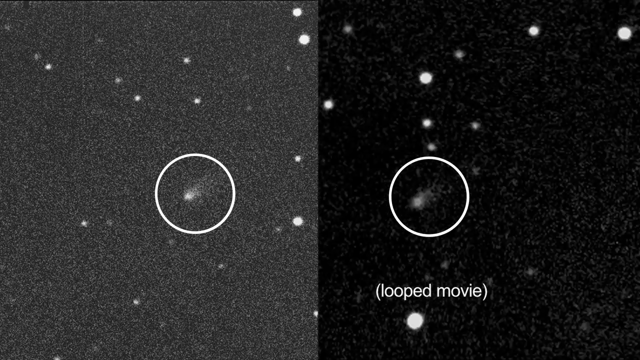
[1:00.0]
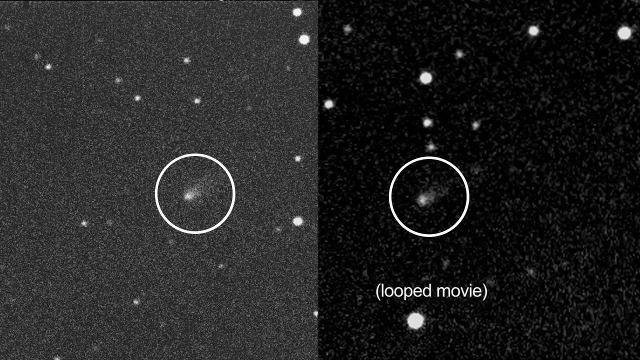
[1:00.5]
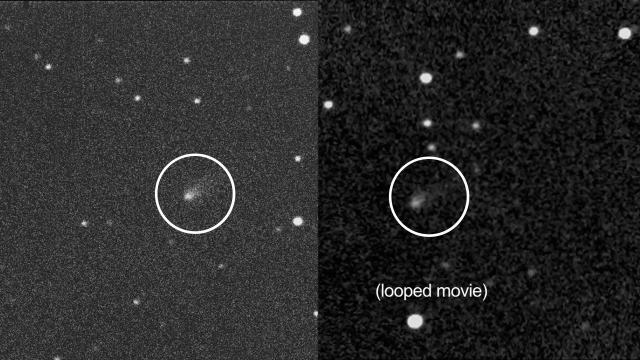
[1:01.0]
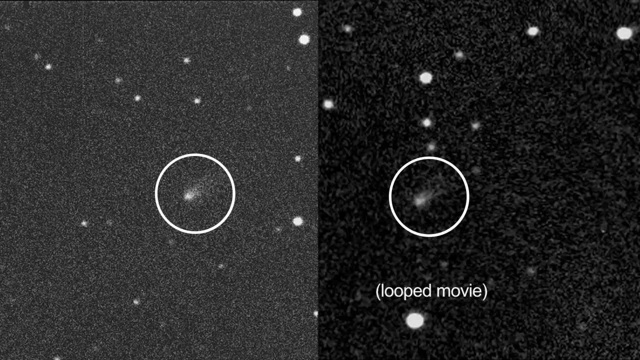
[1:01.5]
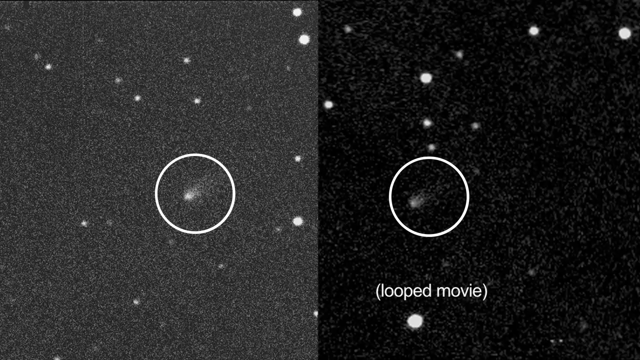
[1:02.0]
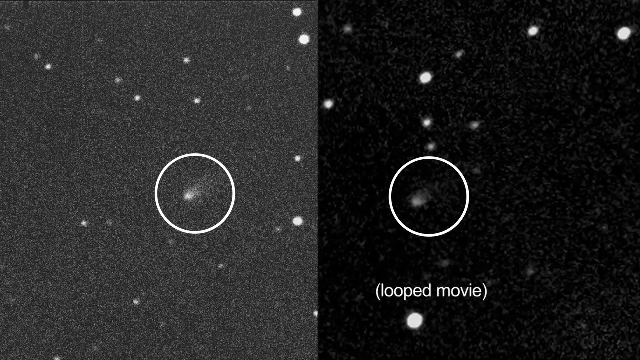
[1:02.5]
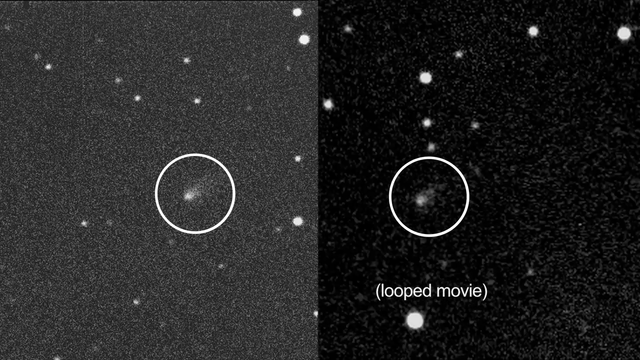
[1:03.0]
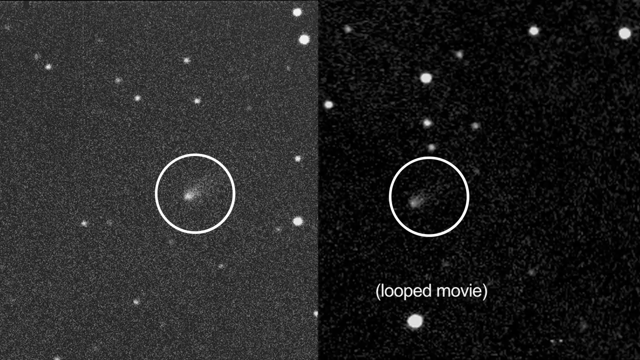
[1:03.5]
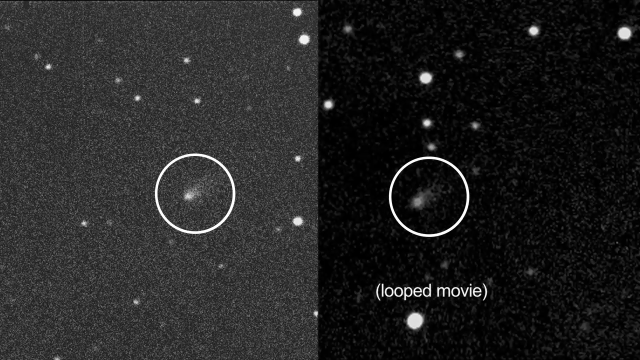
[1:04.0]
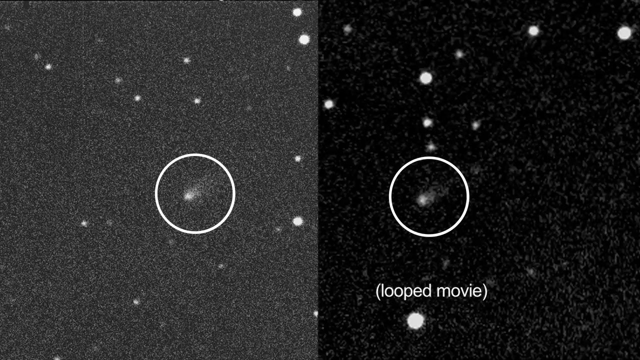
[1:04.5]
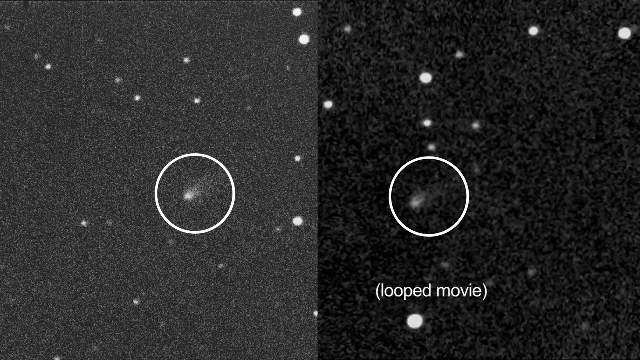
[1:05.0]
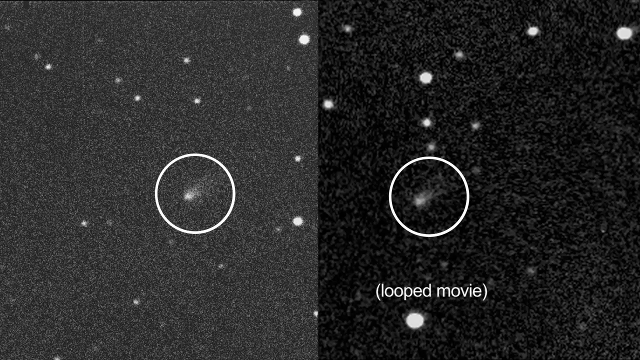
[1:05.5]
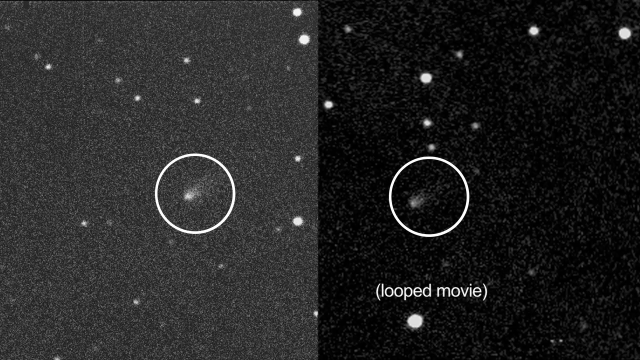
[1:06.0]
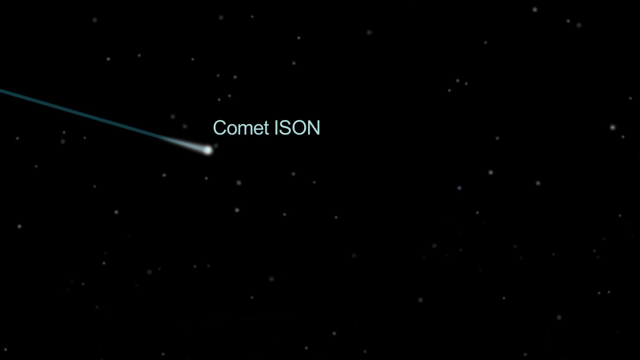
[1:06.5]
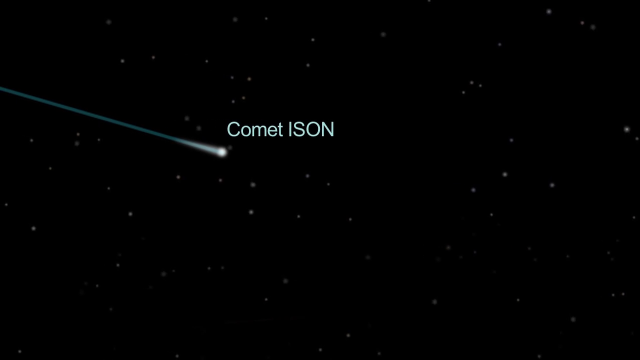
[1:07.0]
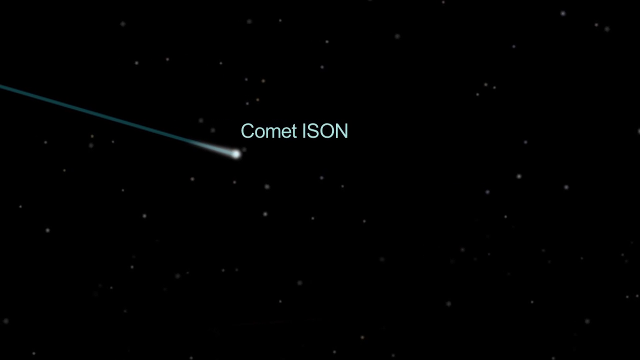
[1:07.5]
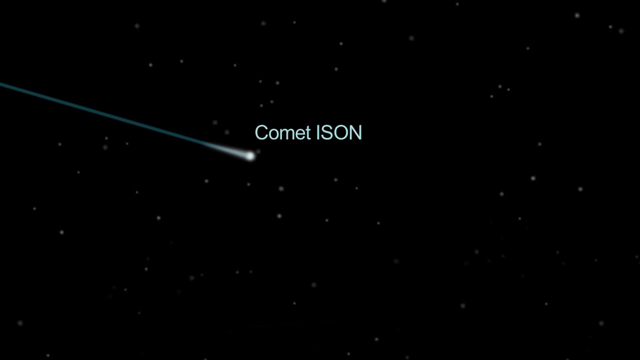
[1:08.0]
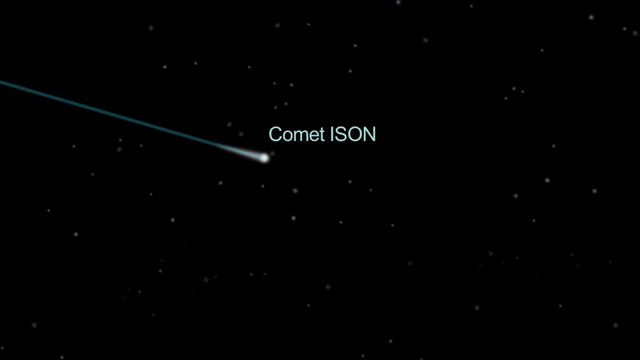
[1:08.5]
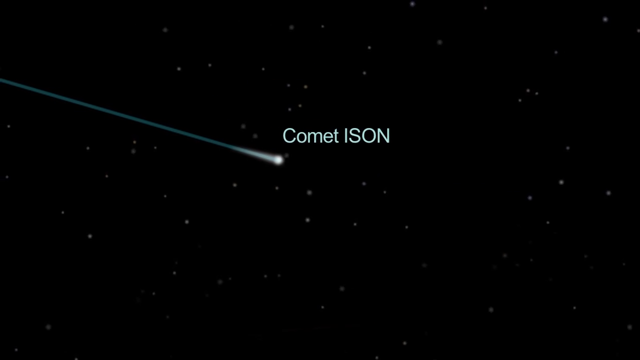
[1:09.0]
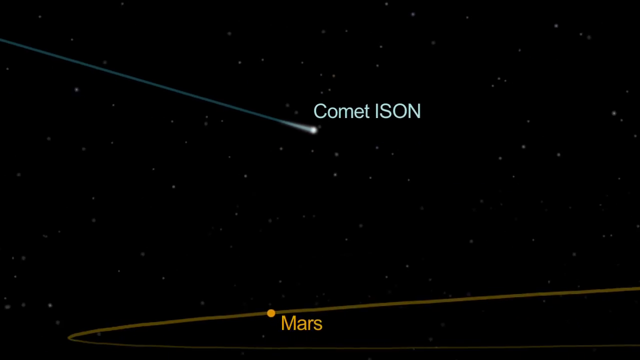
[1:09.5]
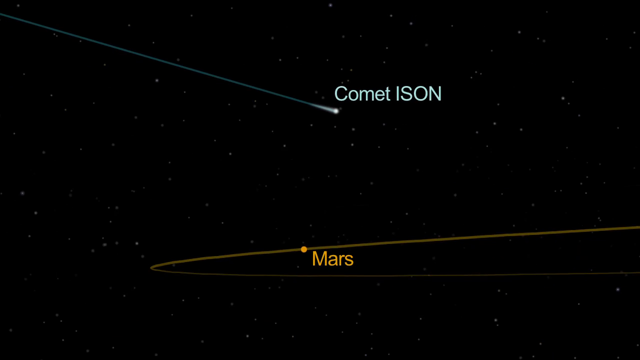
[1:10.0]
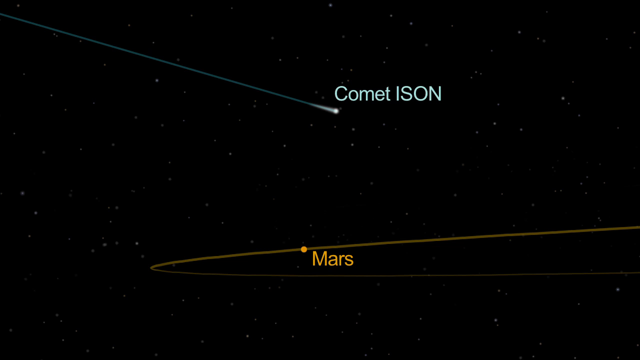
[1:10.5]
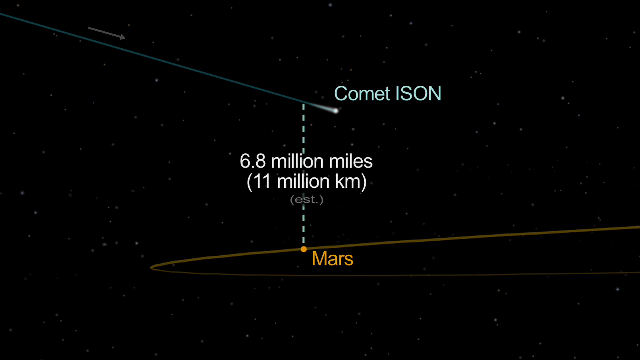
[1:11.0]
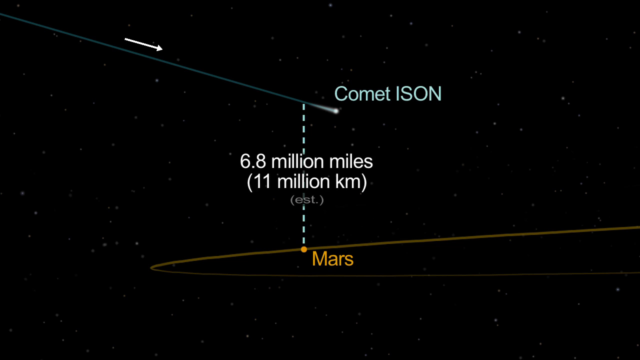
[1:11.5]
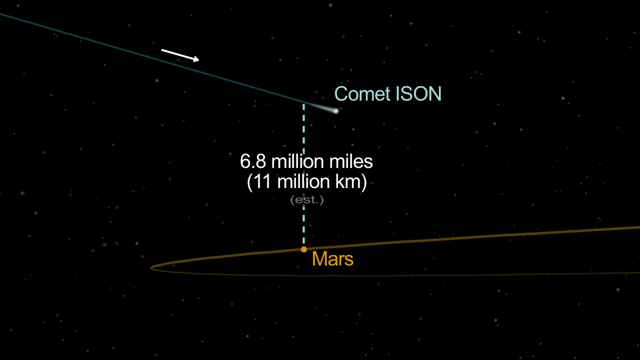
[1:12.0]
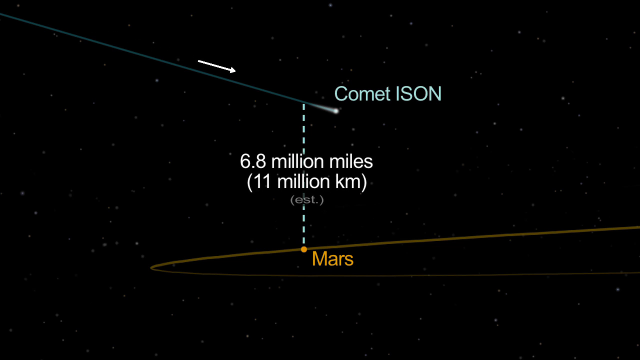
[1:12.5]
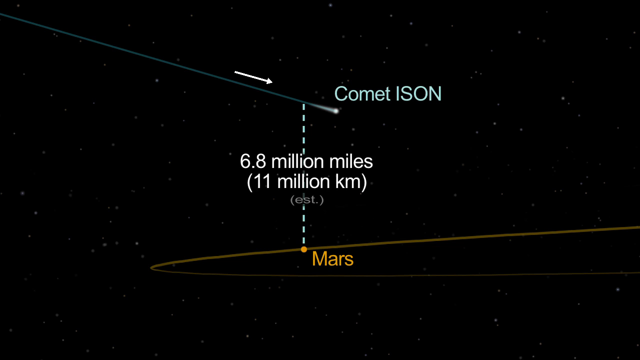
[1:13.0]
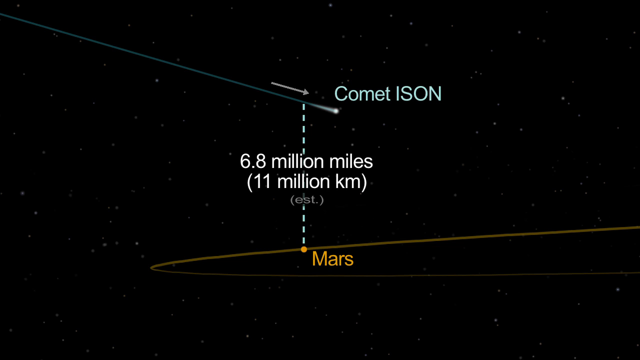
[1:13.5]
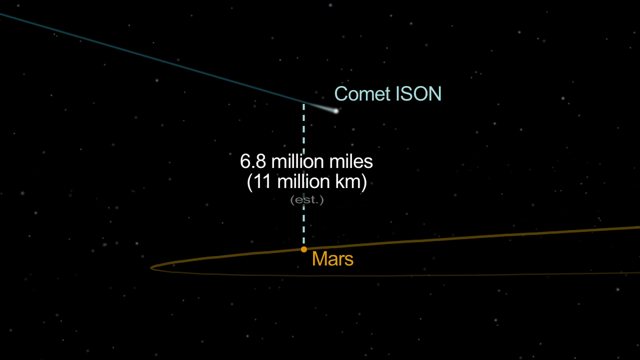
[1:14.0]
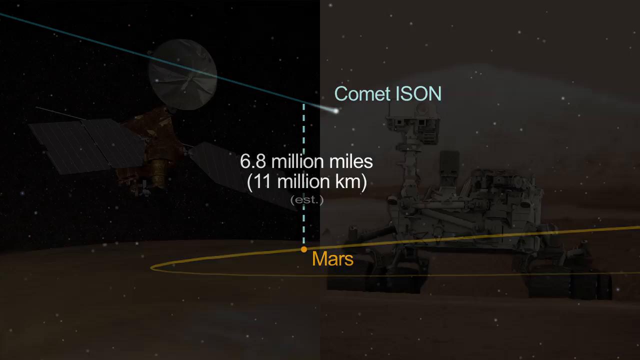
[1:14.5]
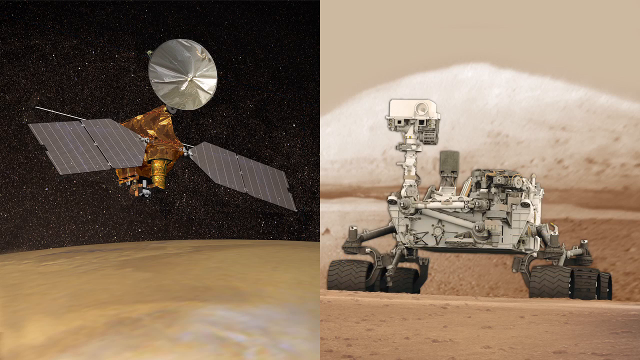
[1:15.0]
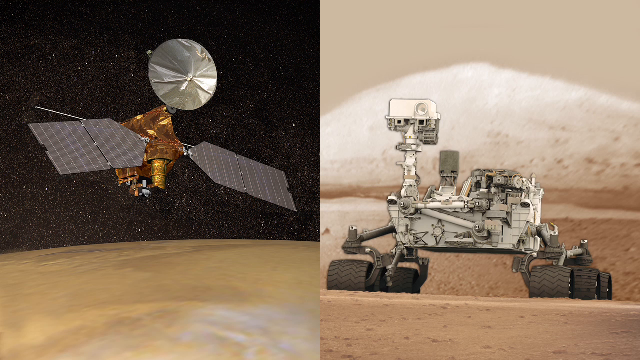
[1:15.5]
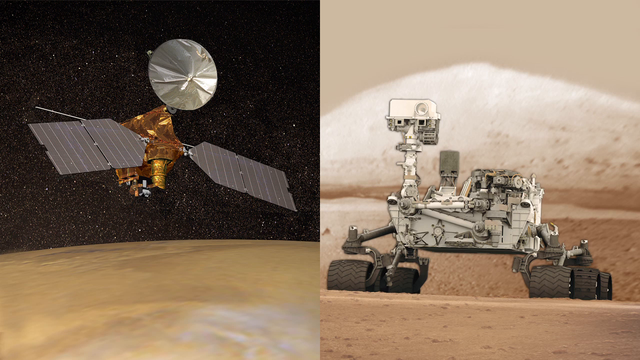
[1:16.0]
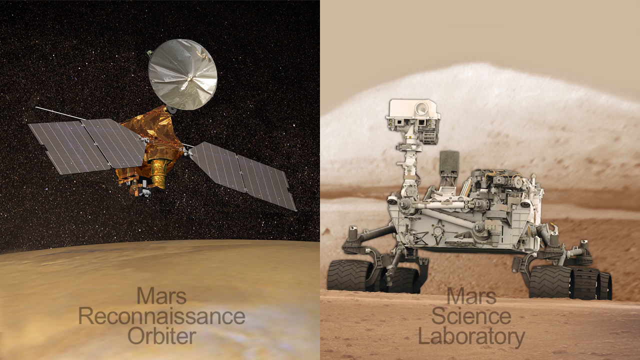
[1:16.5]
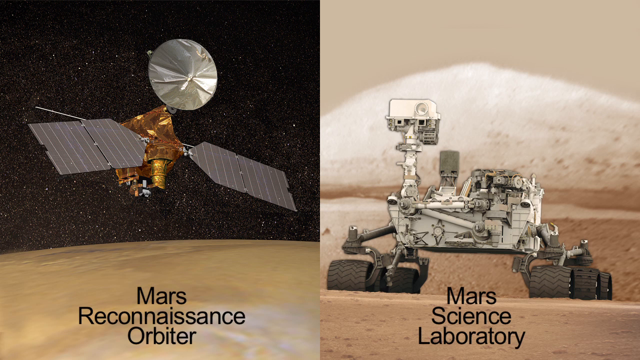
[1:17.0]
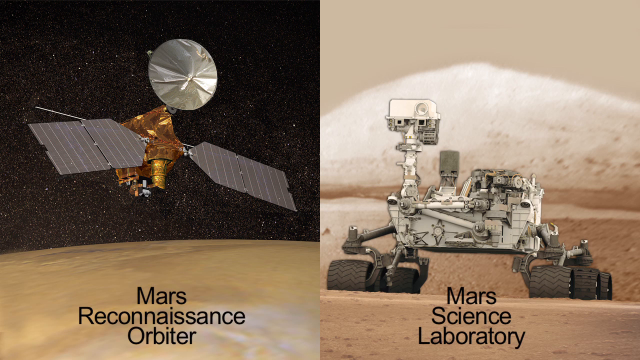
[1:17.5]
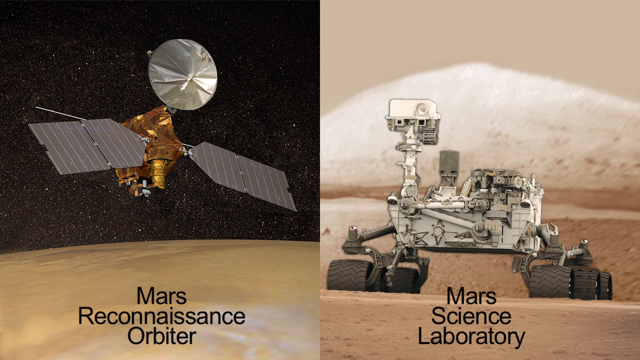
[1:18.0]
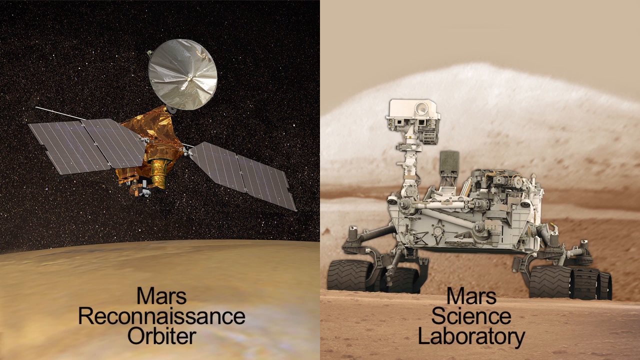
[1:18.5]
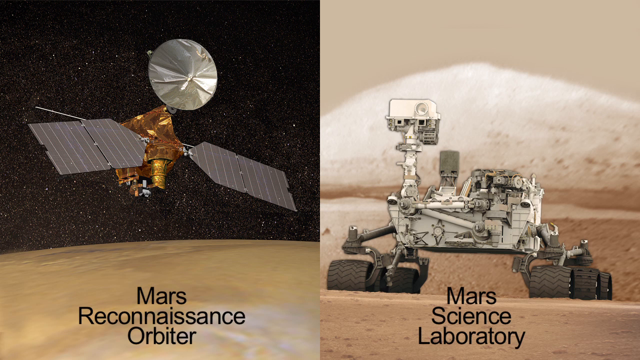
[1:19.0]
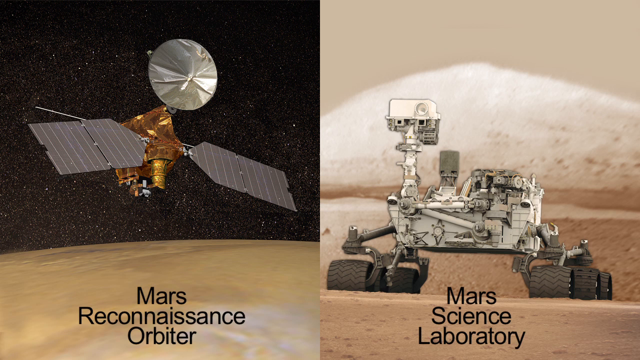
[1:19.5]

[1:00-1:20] A looped movie of what appears to be a comet is shown: black-and-white, super grainy outer space footage, with the image on the left grainier than the one on the right, which is labeled "looped movie". Then a computer-generated comet ISON is shown coming down, Mars's orbit is drawn with a line, and a dashed line indicates that the comet will be an estimated 6.8 million miles (11 million kilometers) from Mars. The Mars reconnaissance vehicle and the Mars science laboratory are then shown; one is the orbiter and the laboratory looks just like a rover.